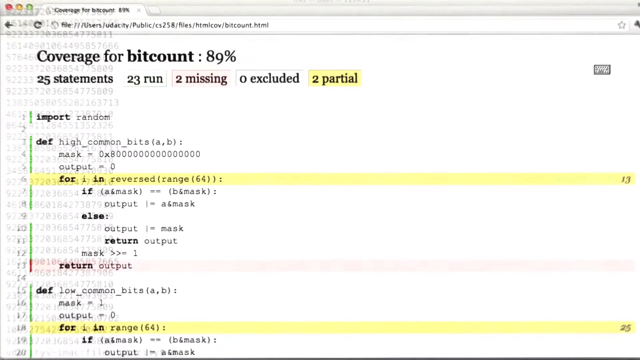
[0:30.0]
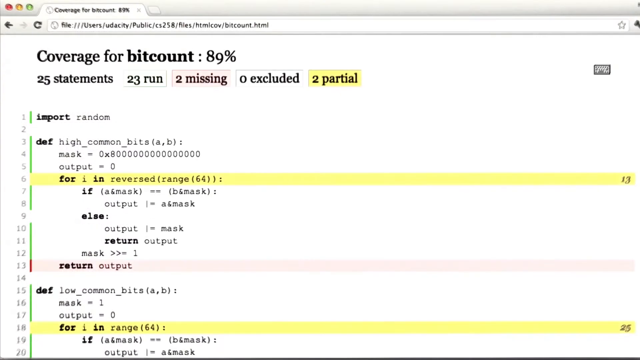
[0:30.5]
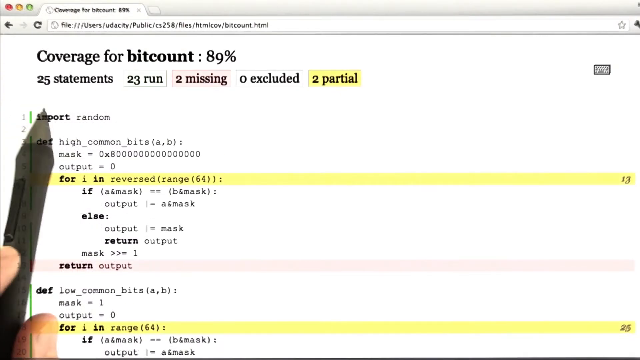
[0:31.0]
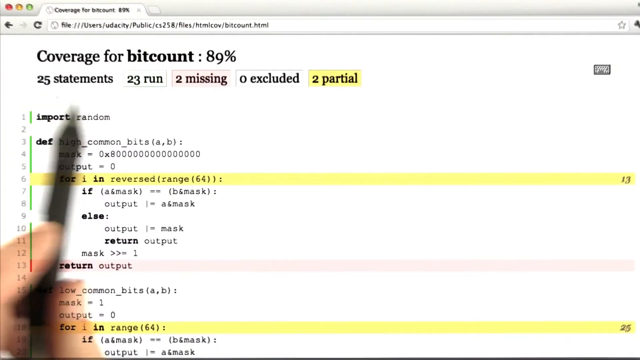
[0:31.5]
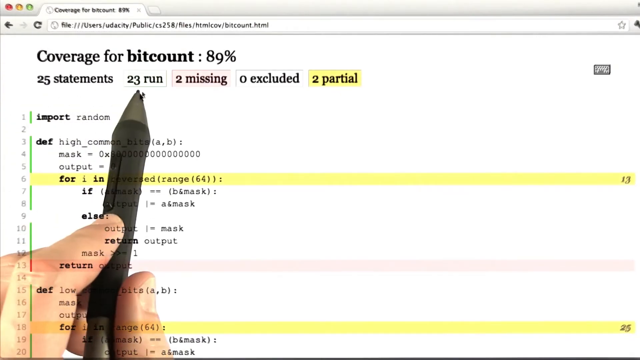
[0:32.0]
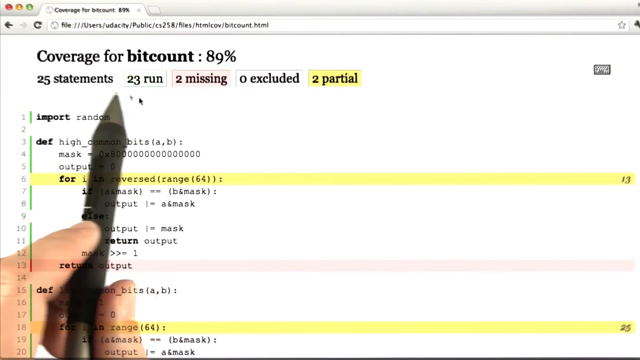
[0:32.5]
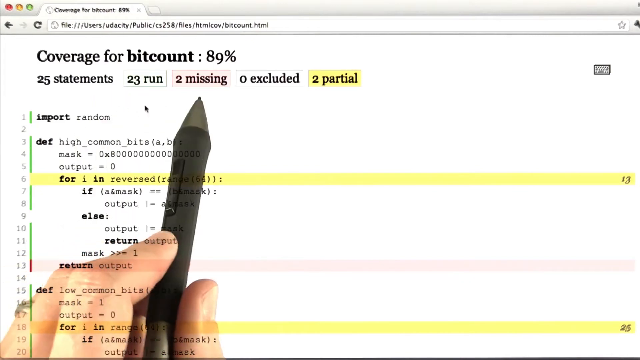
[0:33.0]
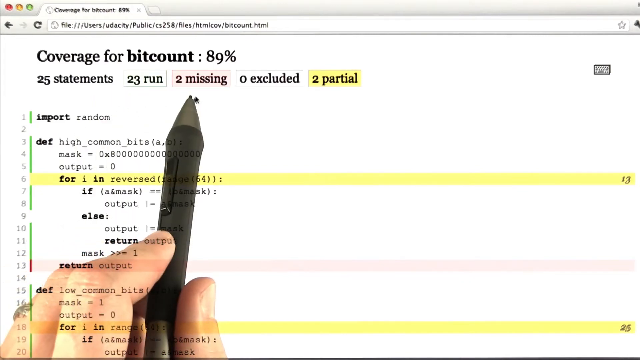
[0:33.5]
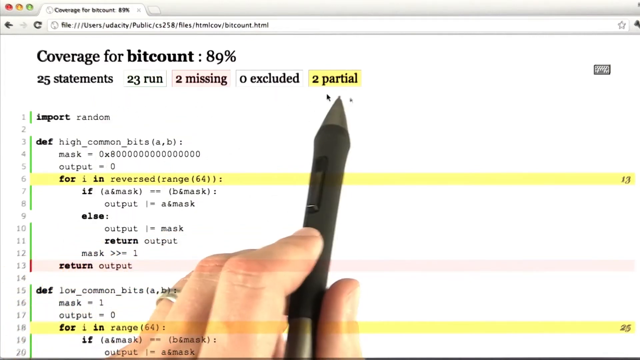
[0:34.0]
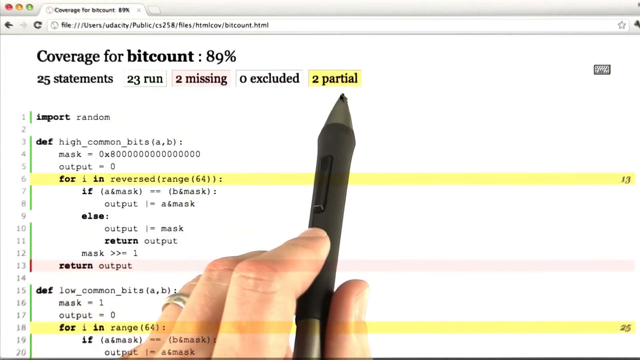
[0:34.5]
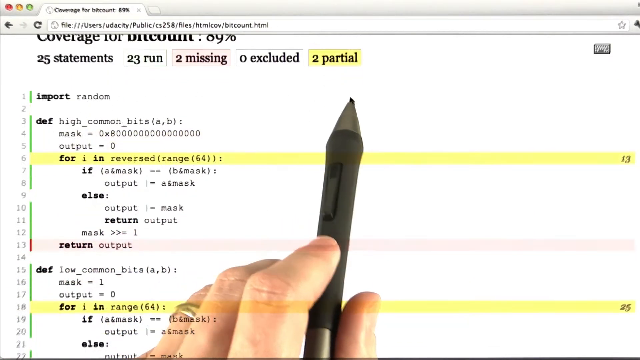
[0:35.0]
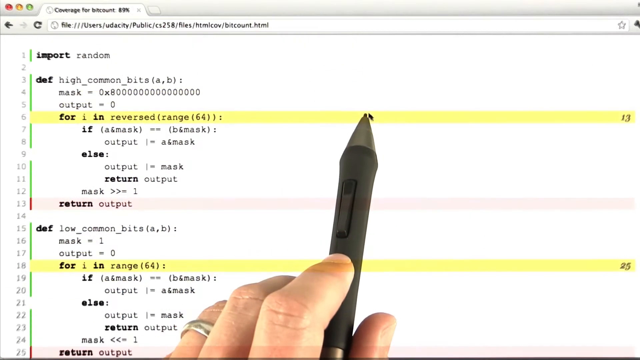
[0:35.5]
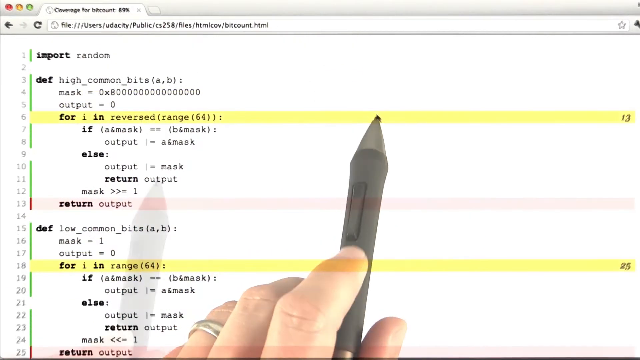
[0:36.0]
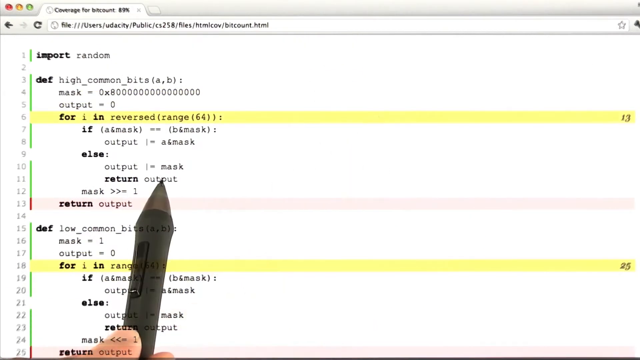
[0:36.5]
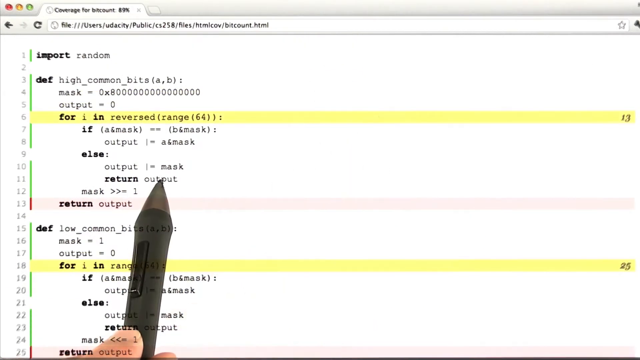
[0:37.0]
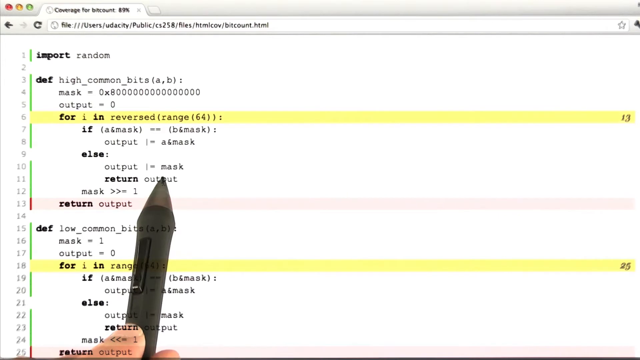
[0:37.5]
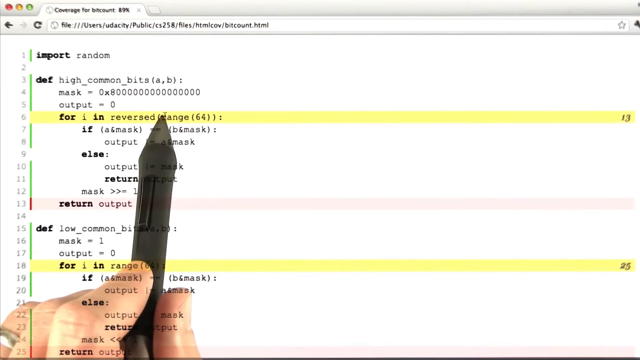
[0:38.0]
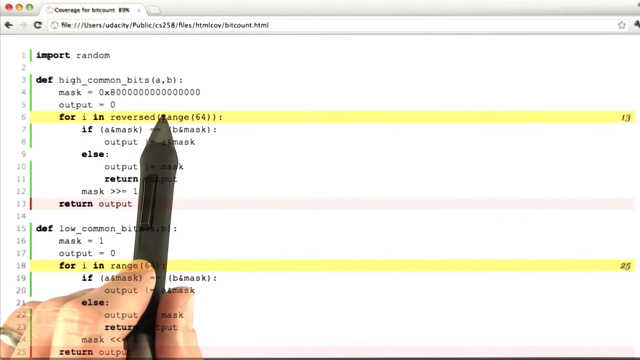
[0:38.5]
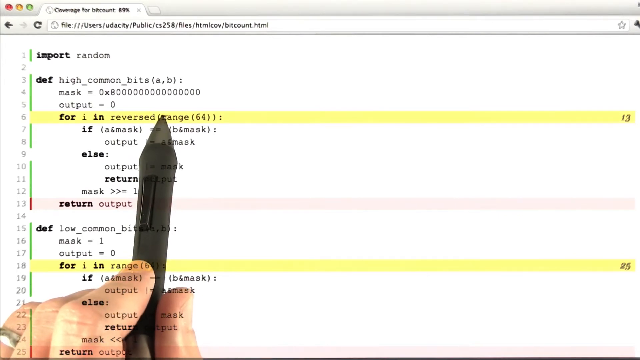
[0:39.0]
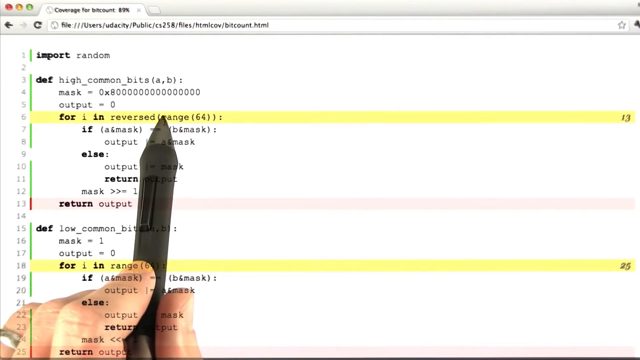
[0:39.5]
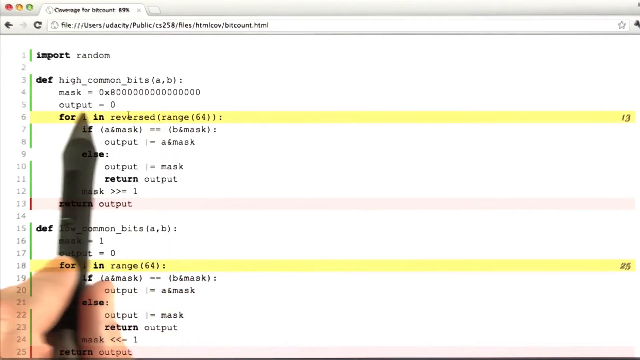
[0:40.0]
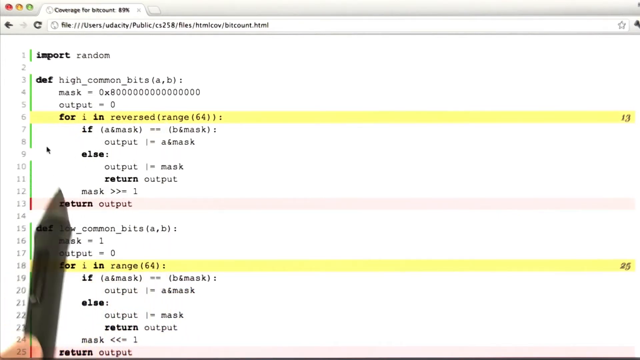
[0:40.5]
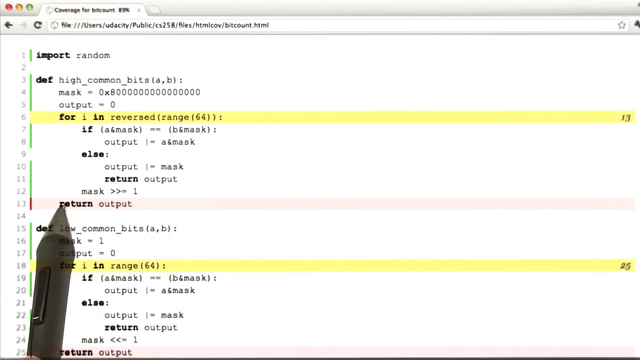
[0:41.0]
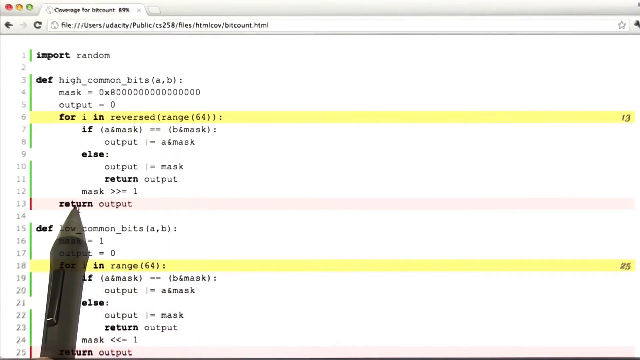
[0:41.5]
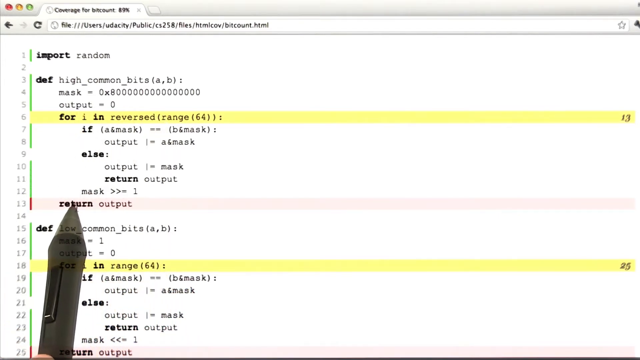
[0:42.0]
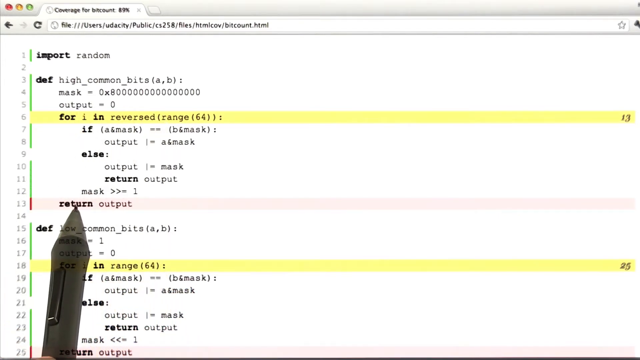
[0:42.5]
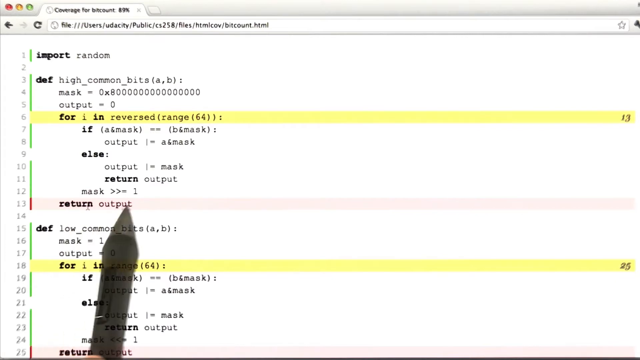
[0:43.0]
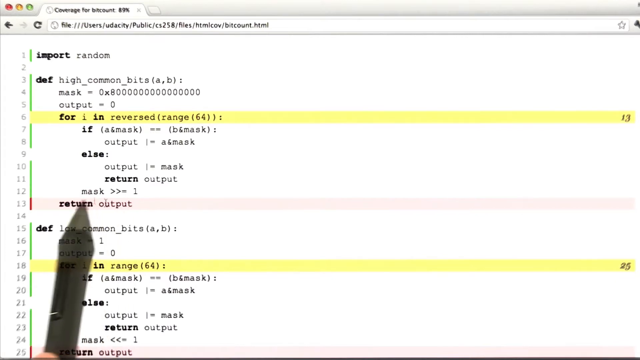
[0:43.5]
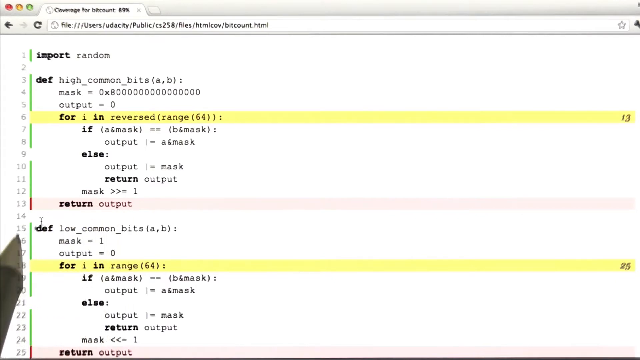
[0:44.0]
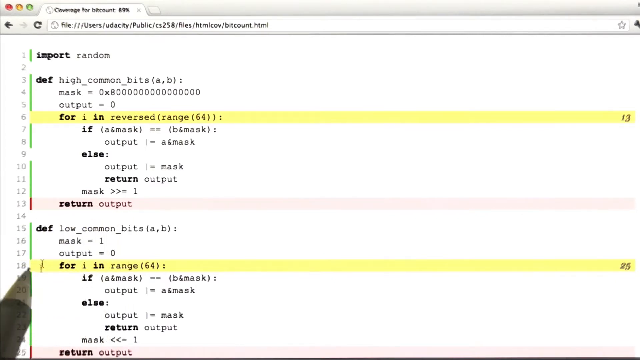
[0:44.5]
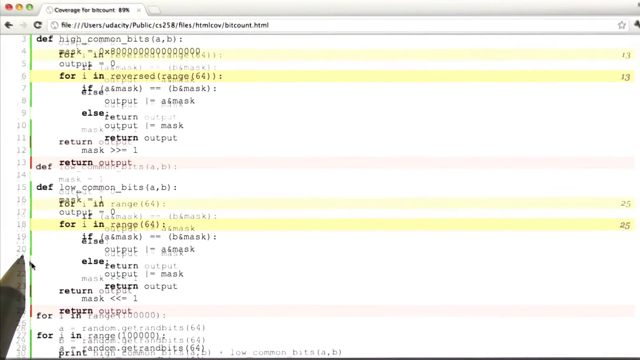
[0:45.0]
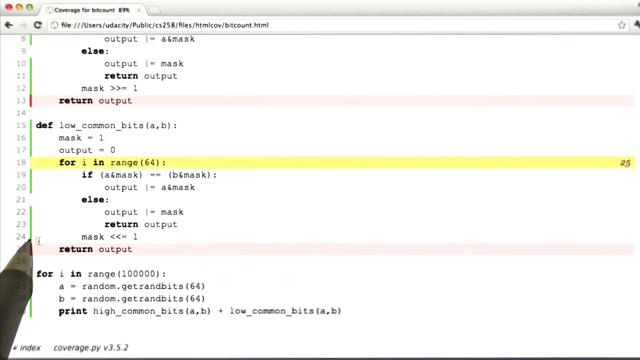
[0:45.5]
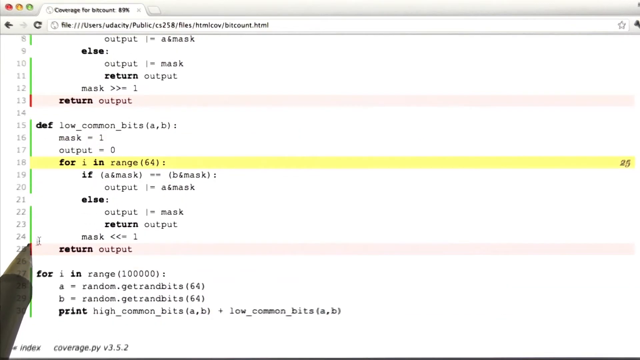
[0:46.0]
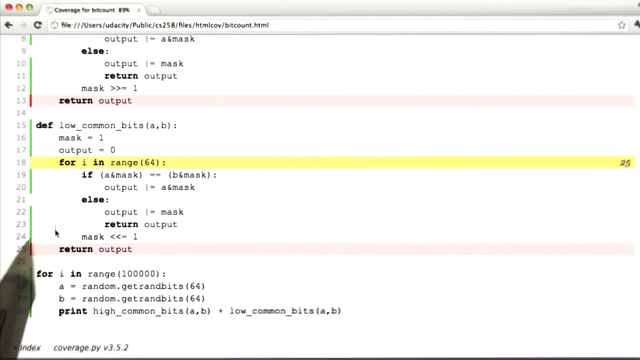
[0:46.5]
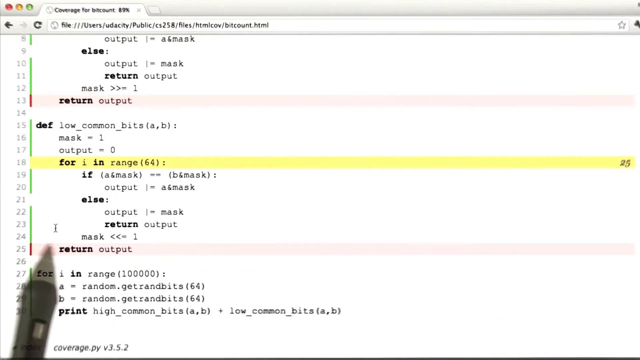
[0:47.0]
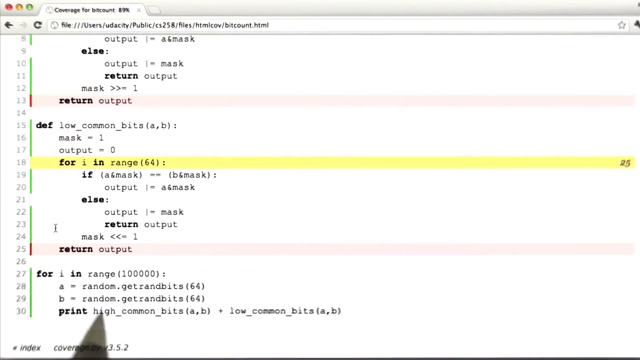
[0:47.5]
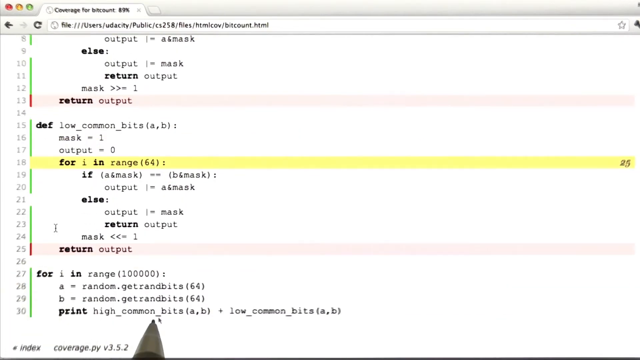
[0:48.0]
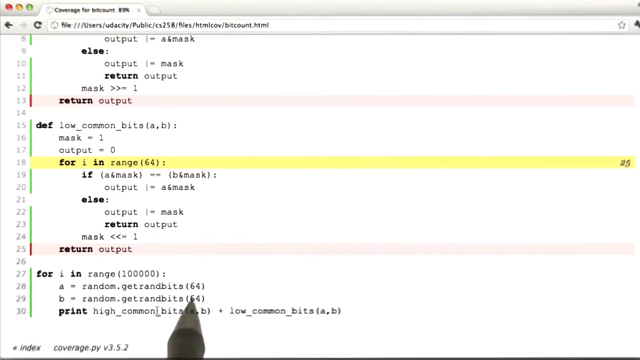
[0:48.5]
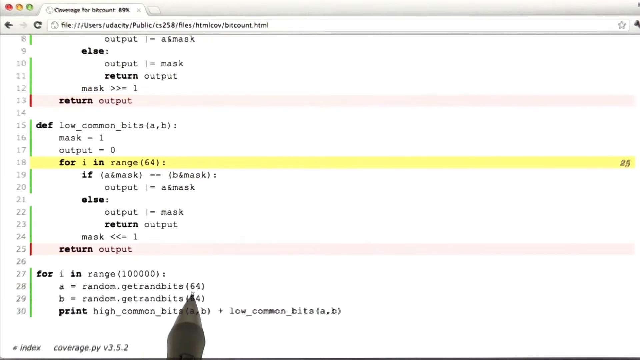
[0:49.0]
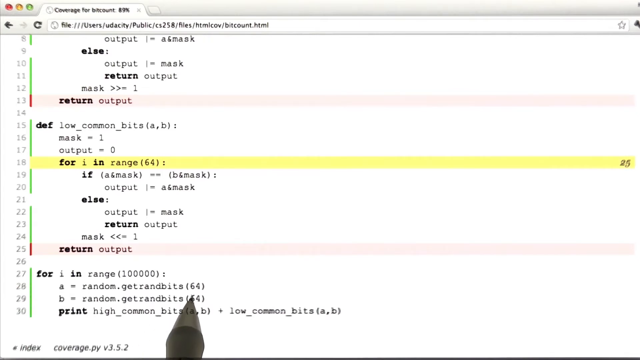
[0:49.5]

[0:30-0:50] A computer screen shows computer code, with one line of code highlighted in yellow in the center. The text at the top reads "coverage for fit count", "89%", "25 statements", "23 run", "2 missing", "0 excluded" and "2 partial", with "partial" highlighted in yellow. An instructor uses a pen stylus on the screen along with a mouse pointer, pointing out lines of code, moving the stylus back and forth and pointing out important numbers around 64. The view then goes back to the original screen with a white background, code on each line and the yellow highlight in the center. A URL box at the top of the screen shows a public folder ending in "Bitcount.html". The pen stylus shows a cursor dot on the screen as the instructor's hand moves it.